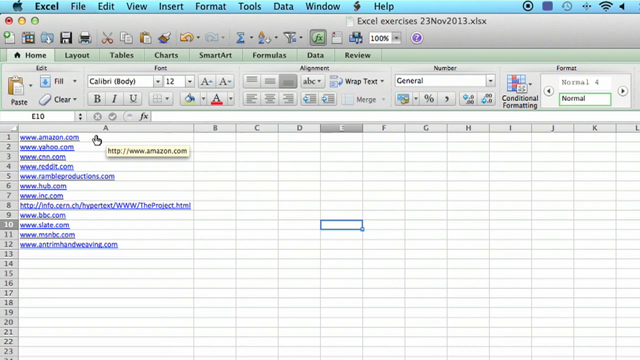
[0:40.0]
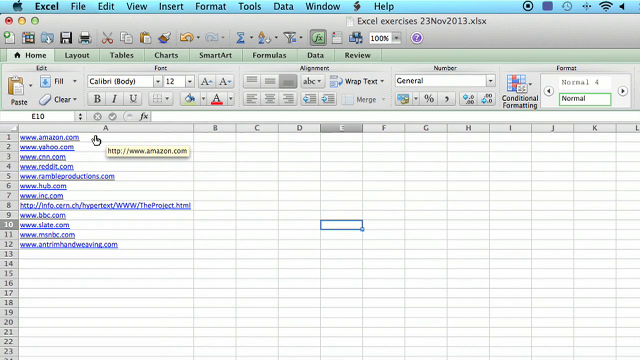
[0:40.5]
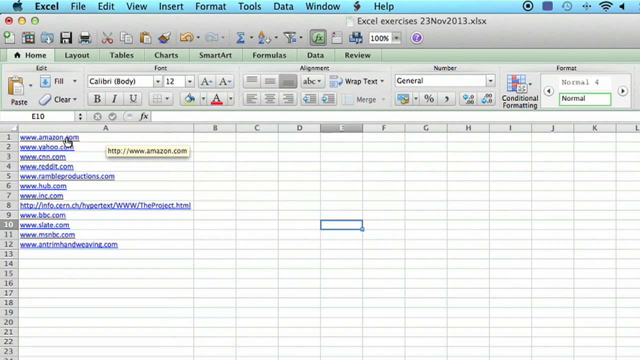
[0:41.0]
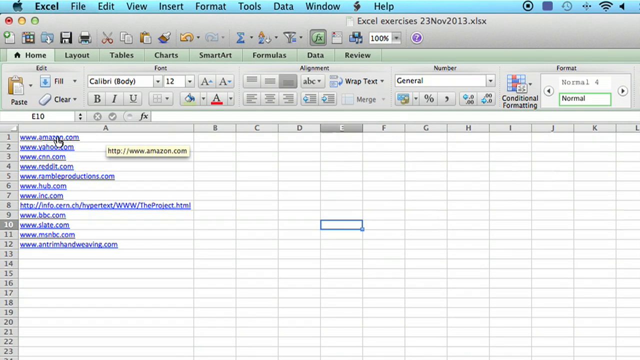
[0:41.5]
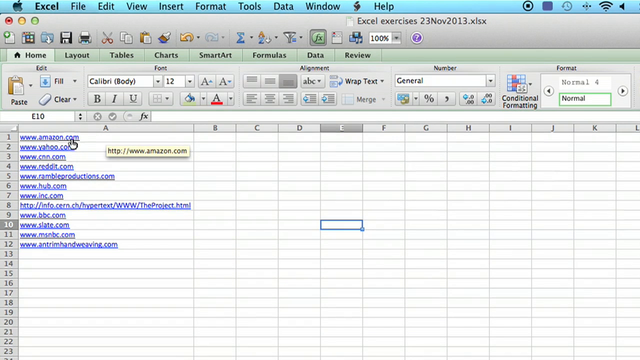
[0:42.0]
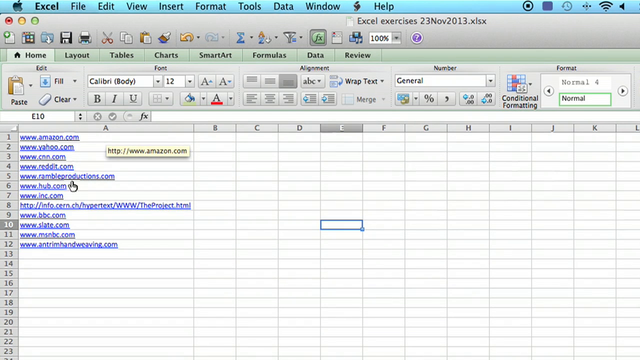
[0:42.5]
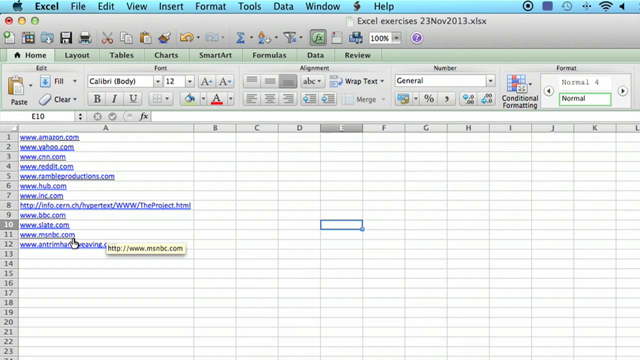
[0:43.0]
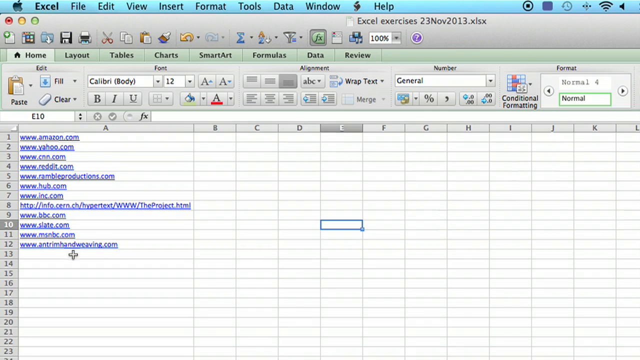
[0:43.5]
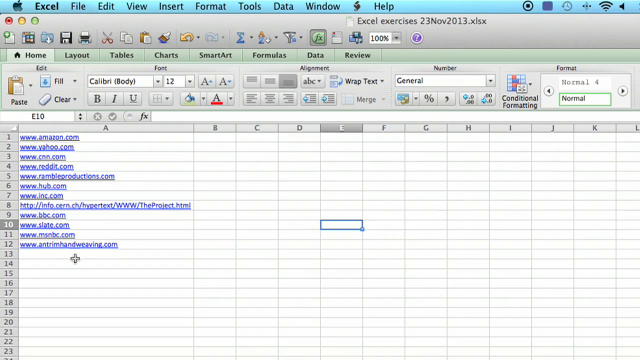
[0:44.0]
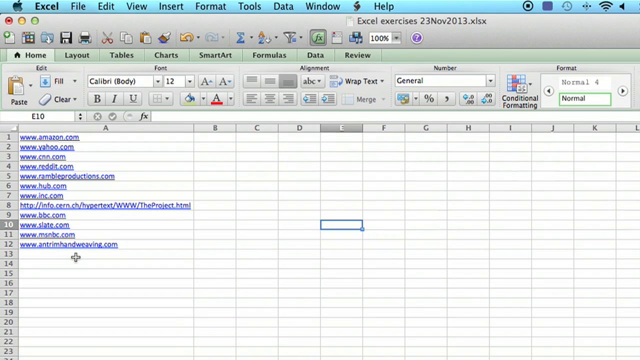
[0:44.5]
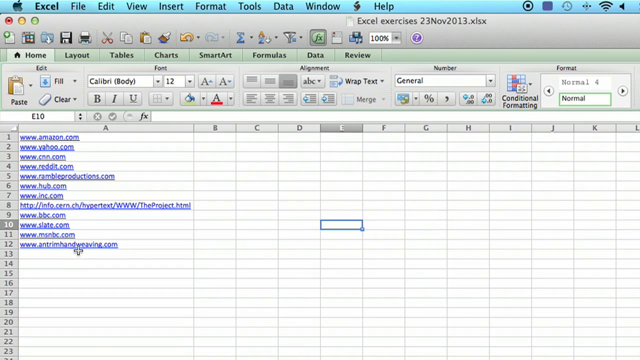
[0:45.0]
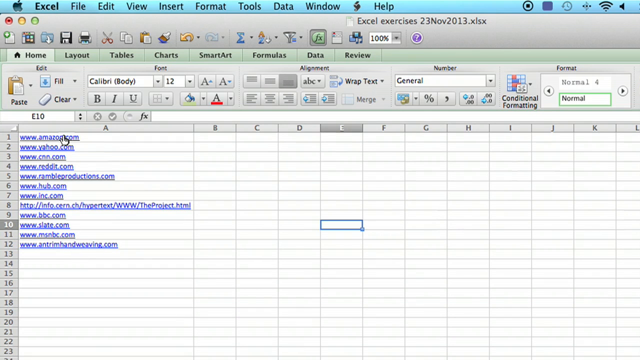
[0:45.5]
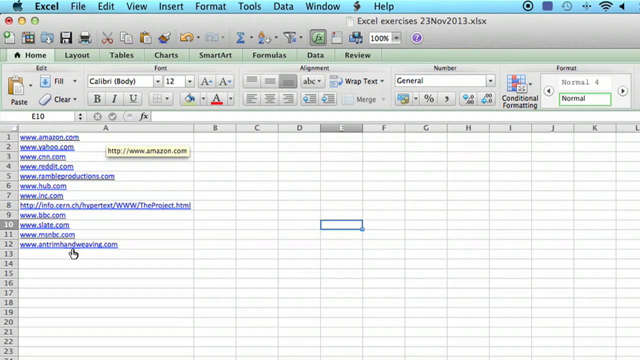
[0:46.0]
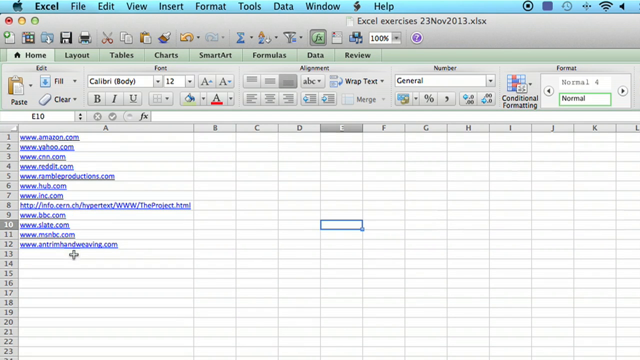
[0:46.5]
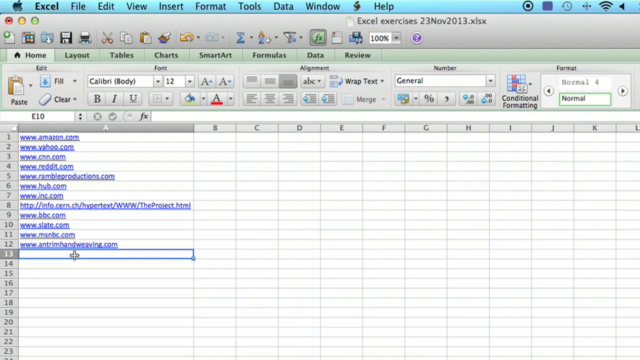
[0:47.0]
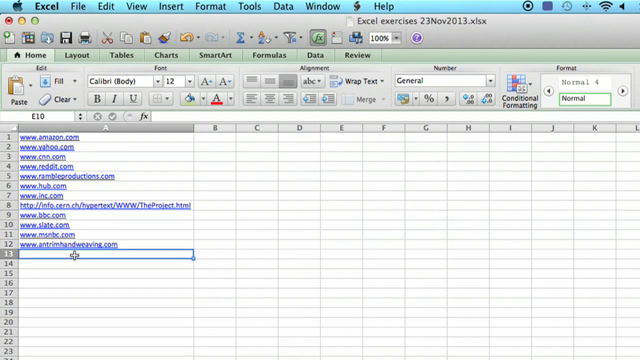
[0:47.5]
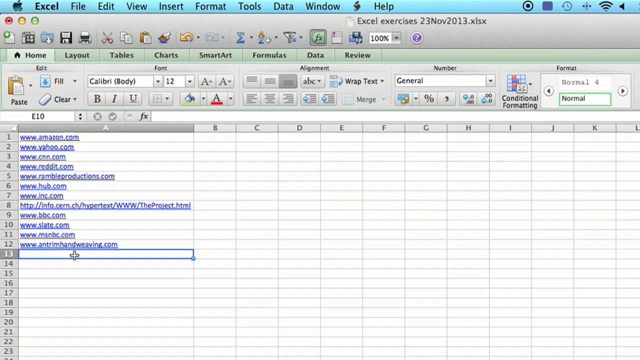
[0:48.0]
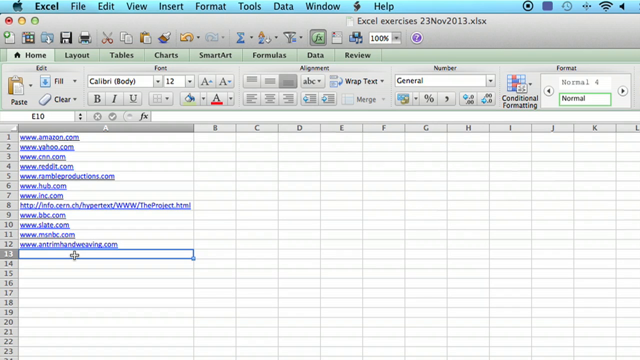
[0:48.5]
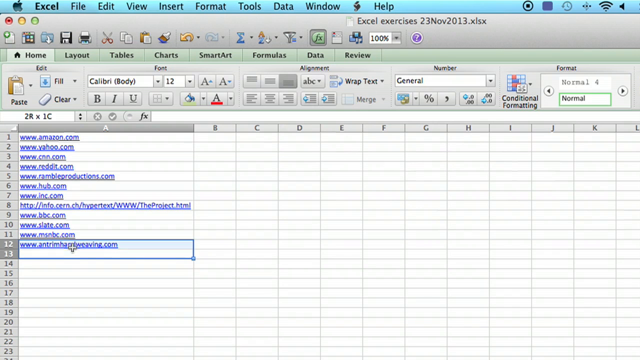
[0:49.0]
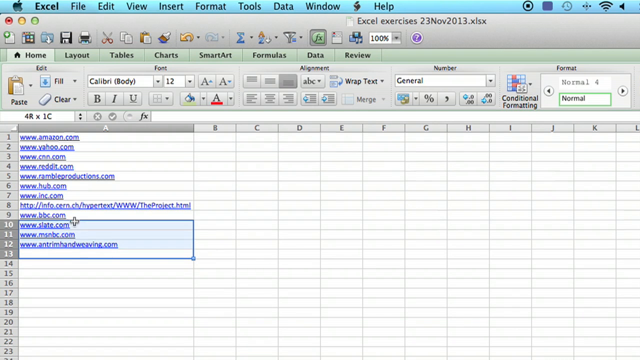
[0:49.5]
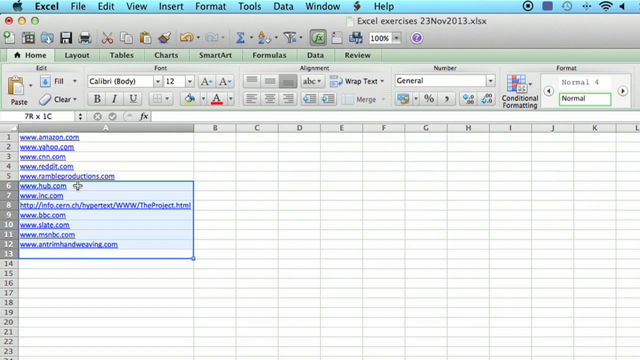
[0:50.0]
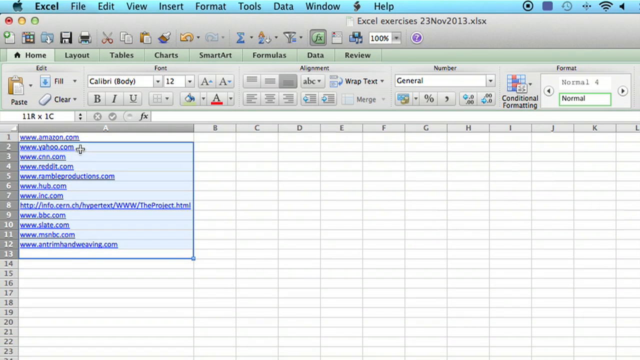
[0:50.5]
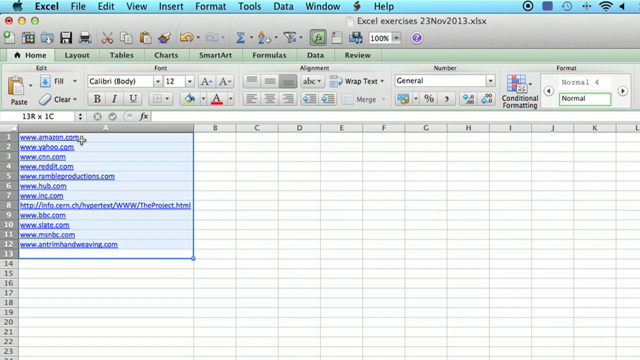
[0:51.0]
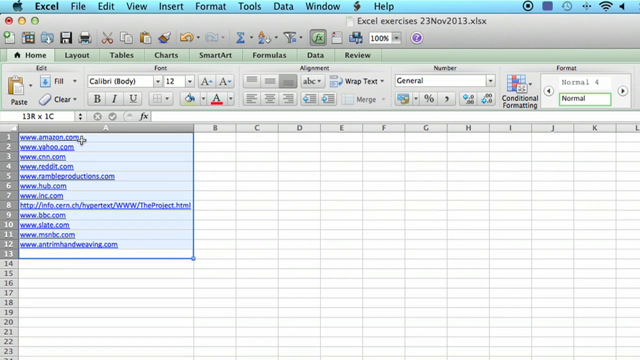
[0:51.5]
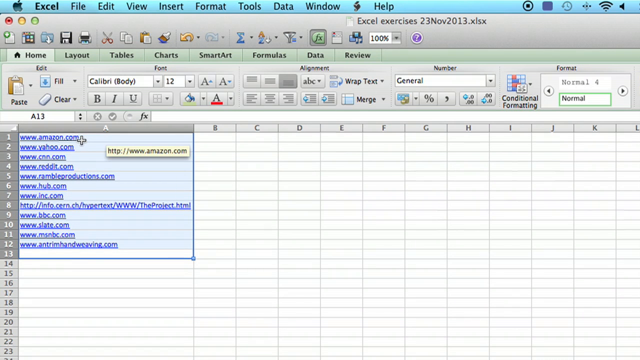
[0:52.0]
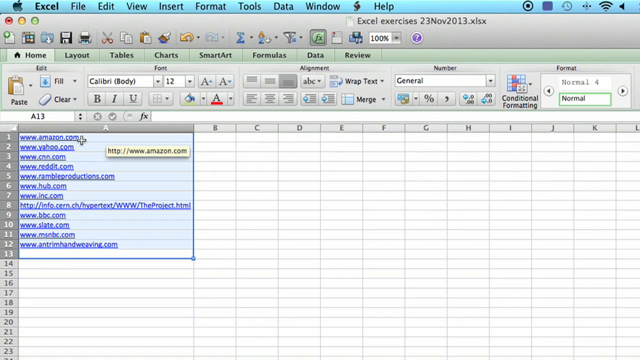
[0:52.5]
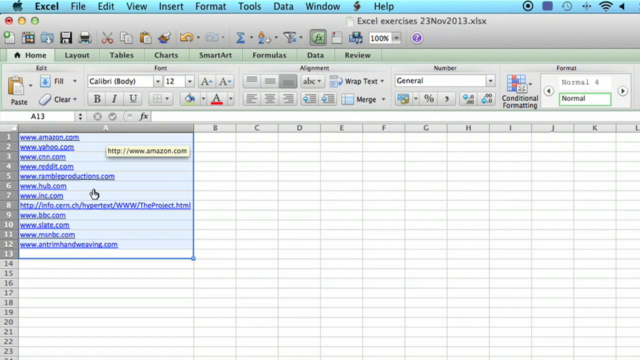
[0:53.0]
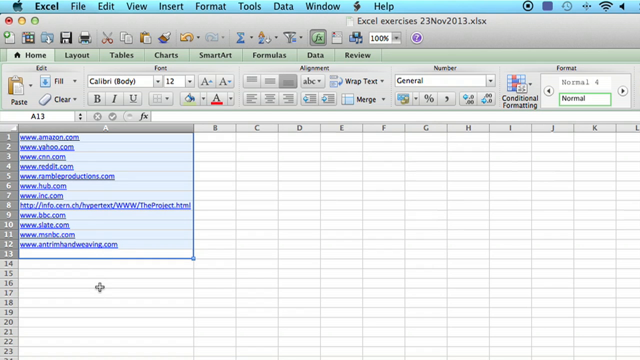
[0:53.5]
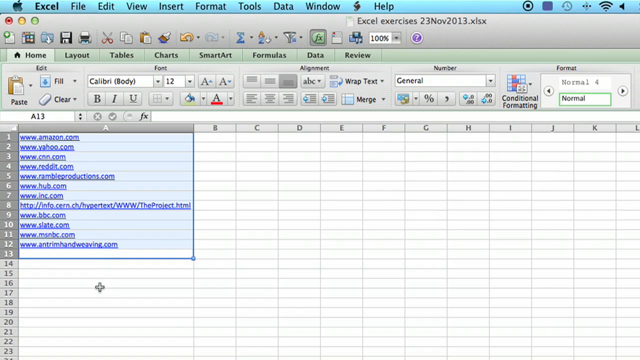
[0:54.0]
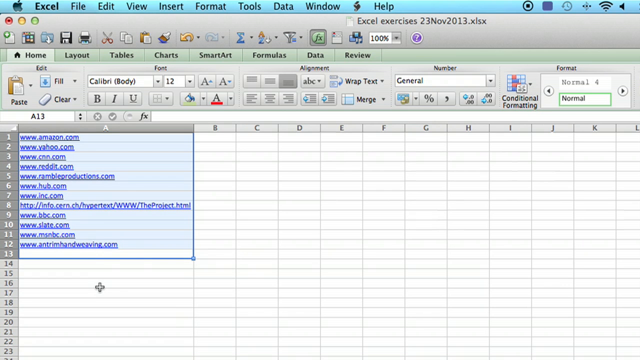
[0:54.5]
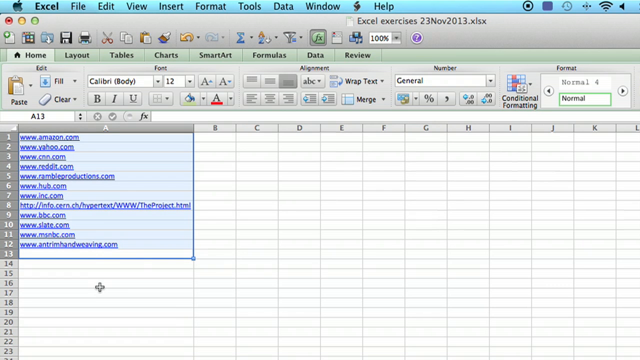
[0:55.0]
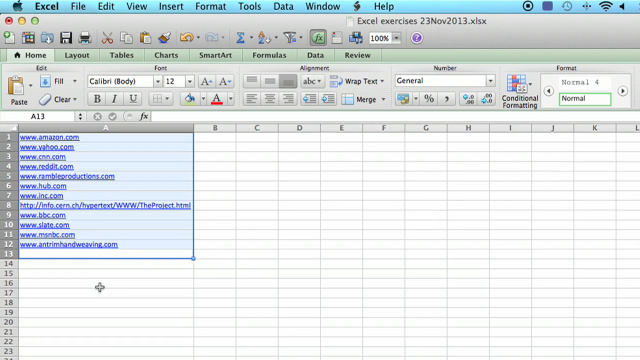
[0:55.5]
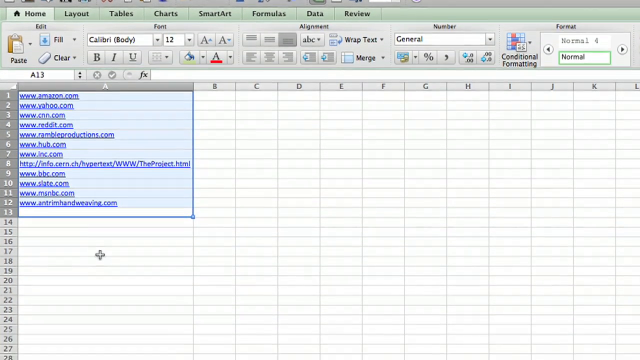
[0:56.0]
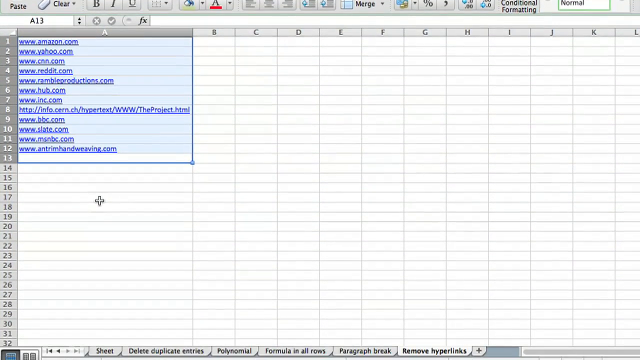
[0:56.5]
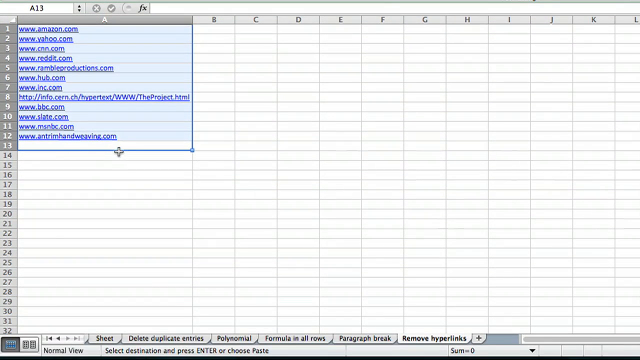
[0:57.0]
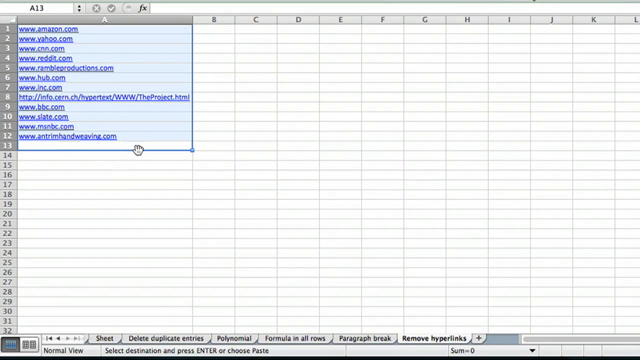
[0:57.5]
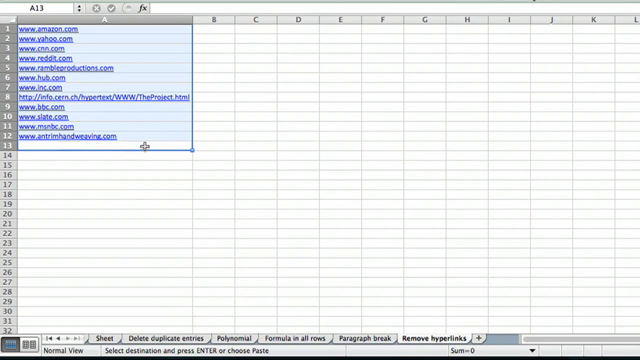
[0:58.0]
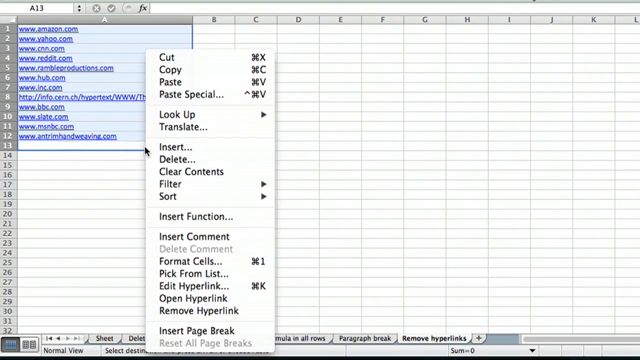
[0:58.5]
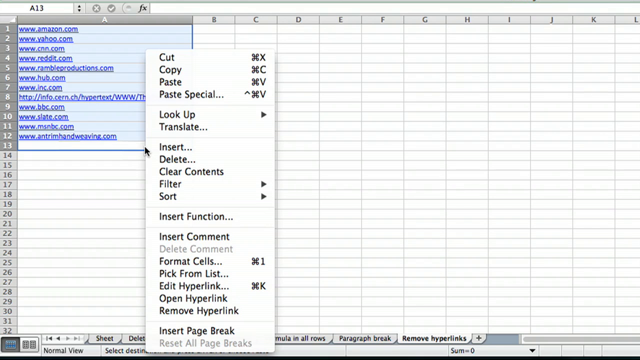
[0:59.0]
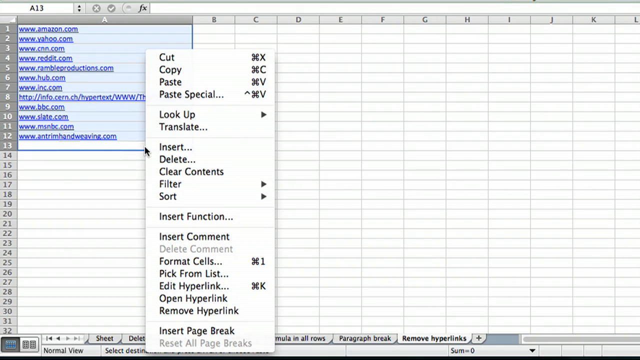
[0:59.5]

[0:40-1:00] The page is already zoomed in on the URLs in the spreadsheet. The spreadsheet is in Excel on an Apple device, with a picture of the Apple logo at the top, in a white and teal color scheme. It is laid out in 12 lines, each with a different URL: amazon.com, yahoo.com, cnn, reddit, ramble production hub inc, bbc, slate, msnbc and two others. The spreadsheet belongs to an engineer named Patrick, who moves his mouse back and forth across it. He expands his list down a few lines and opens up text on the side, apparently getting ready to copy or duplicate everything.